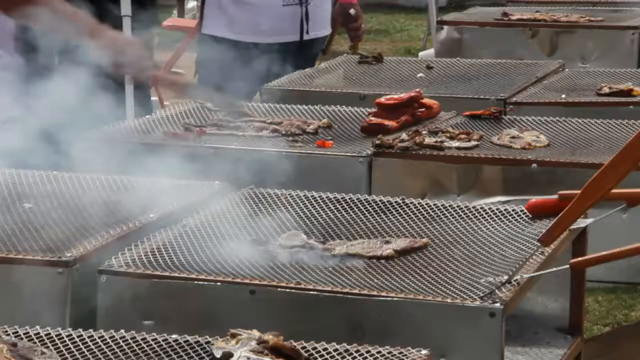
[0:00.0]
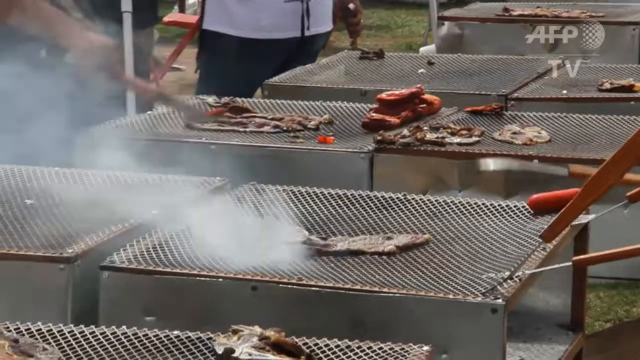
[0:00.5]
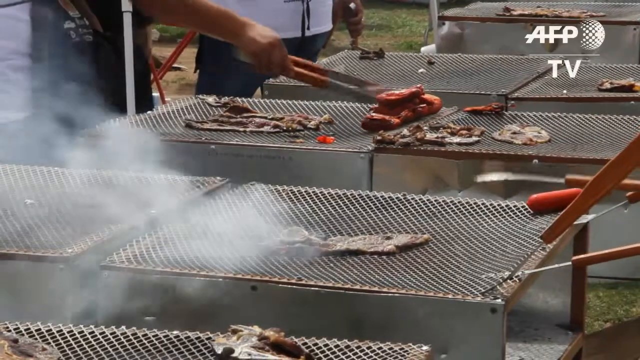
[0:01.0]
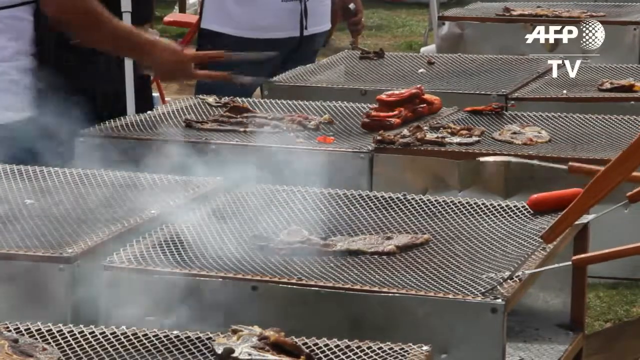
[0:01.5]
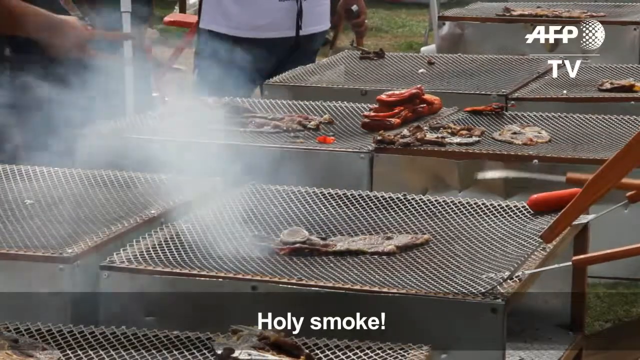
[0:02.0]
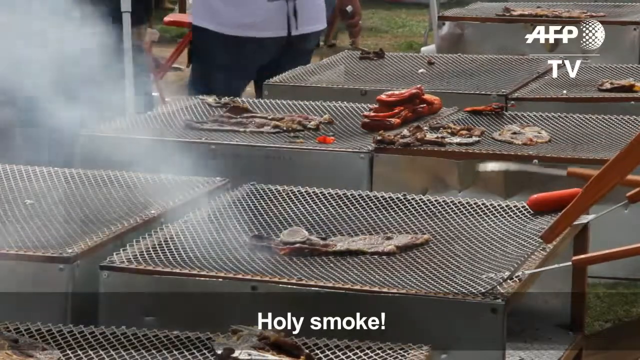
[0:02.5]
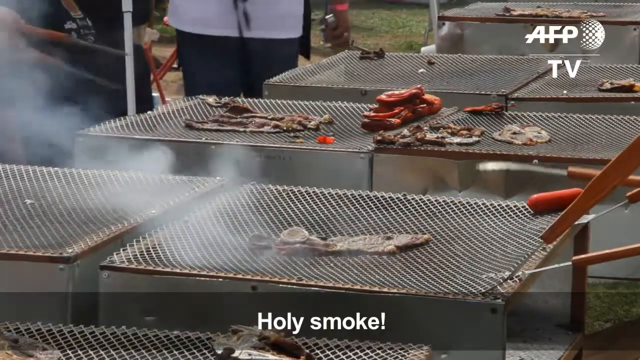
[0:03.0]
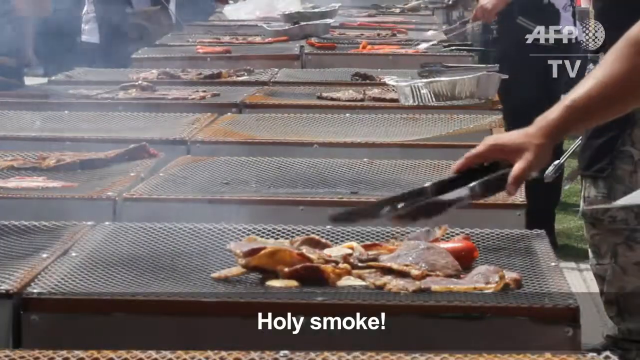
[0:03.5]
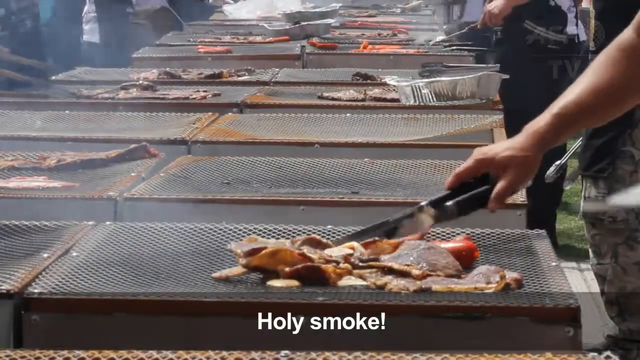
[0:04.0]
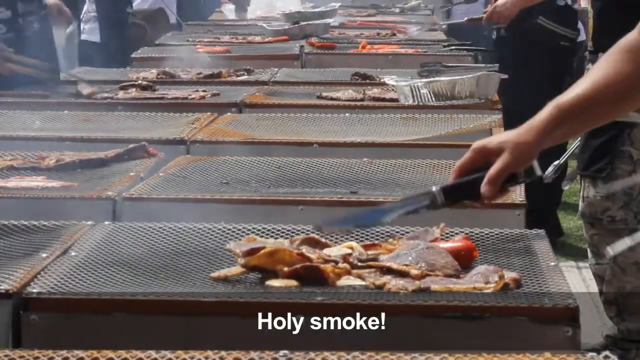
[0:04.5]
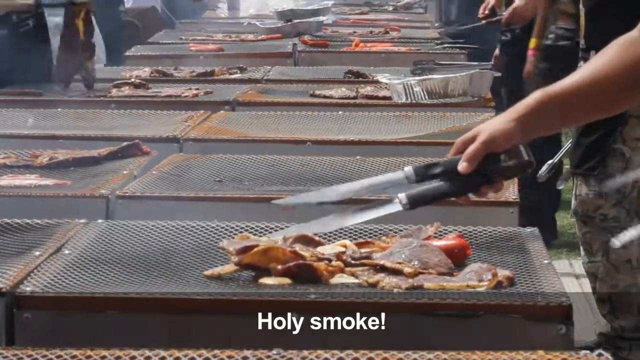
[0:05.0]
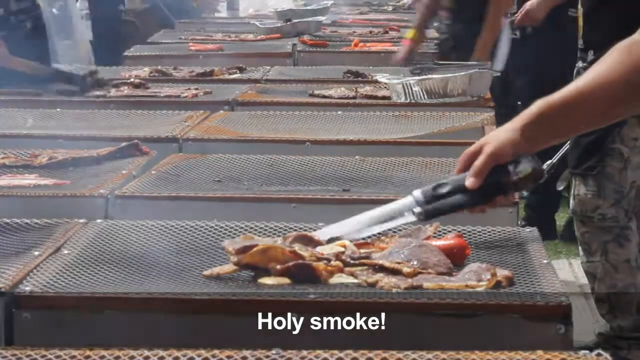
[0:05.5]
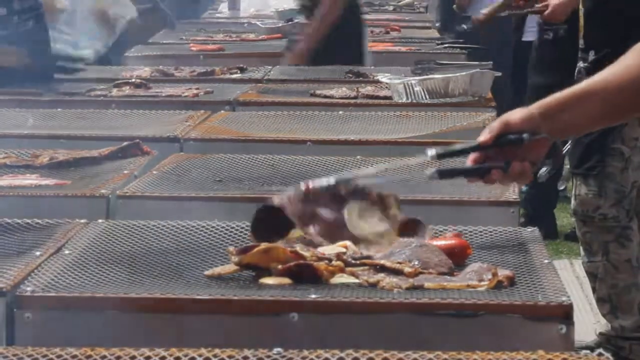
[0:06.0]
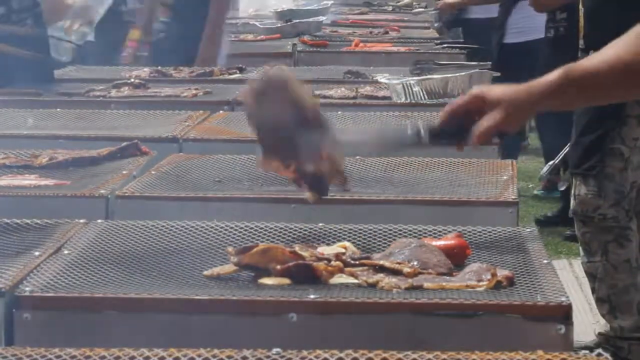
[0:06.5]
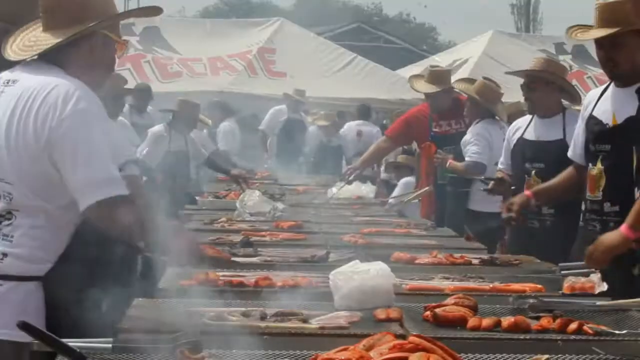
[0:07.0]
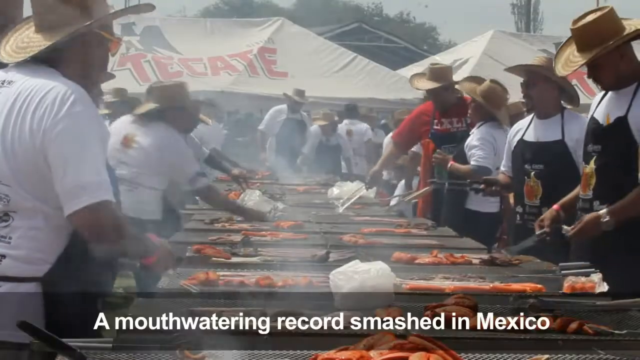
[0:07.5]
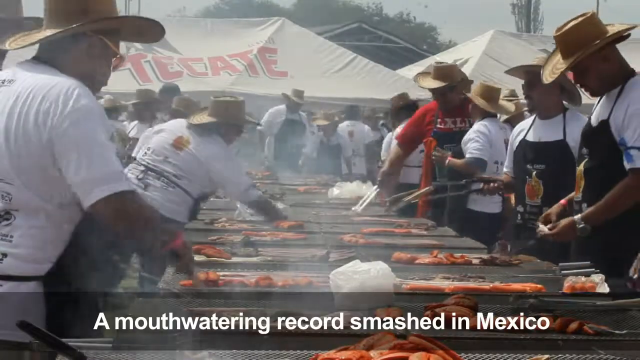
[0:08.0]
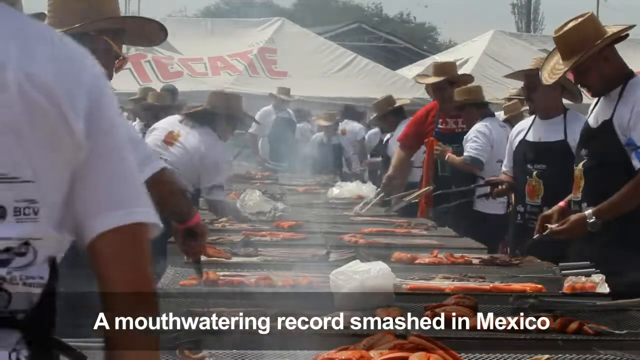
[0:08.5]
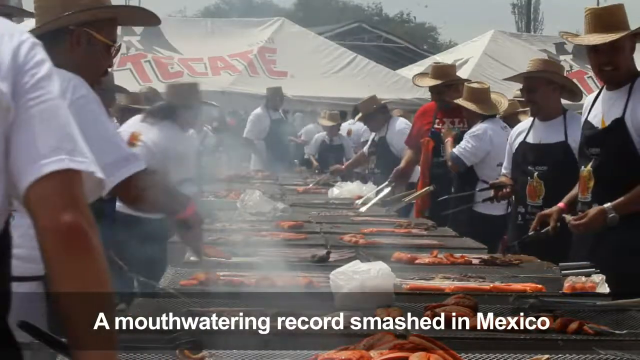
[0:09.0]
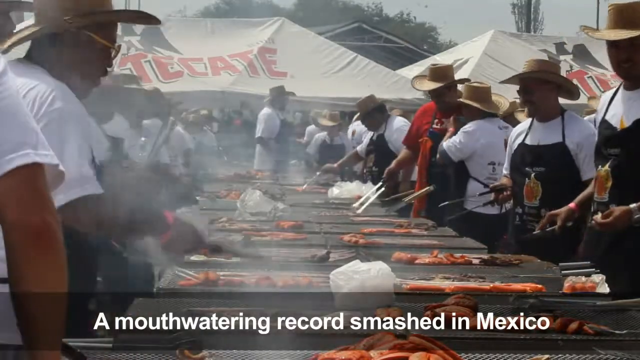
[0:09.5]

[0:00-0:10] A group of people barbecue on outdoor barbecue grills. There are at least 10 rectangular barbecue grills in a field or garden, with meat or fish cooking on several of them. At least two men with barbecue tongs see to the grilling. A caption appears on screen in white letters reading "Holy Smoke!" as smoke rises. The next shot shows many more barbecue grills in lines: two rows with at least 10 grills in each row. At the front of the screen, a man tends to various cuts of meat on his barbecue and turns over a large steak slice. The view then expands to reveal an incredibly large barbecuing event with lots of men wearing aprons with pints of beer with a flame coming out. Many of them wear cowboy hats, and they also wear white t-shirts. Many of them are standing, tending to each barbecue grill. There are tents in the background, with many other people attending. Another caption appears on screen reading "A mouth-watering record smashed in Mexico."